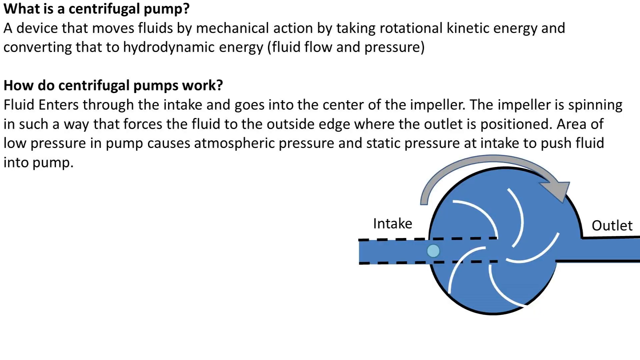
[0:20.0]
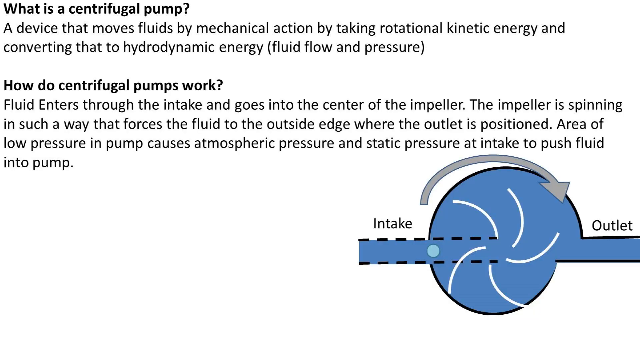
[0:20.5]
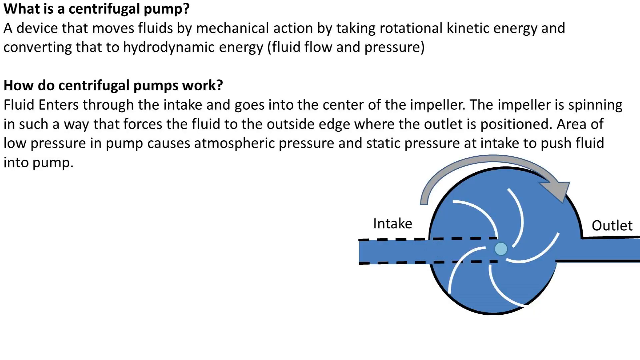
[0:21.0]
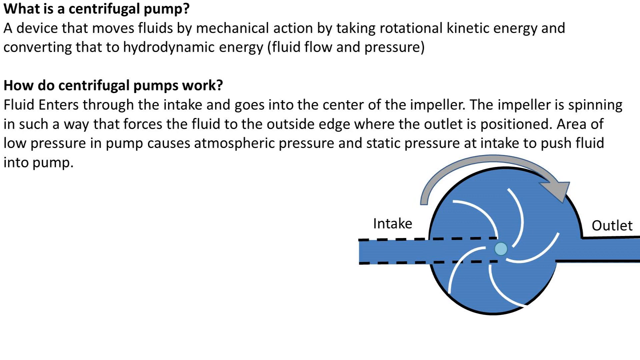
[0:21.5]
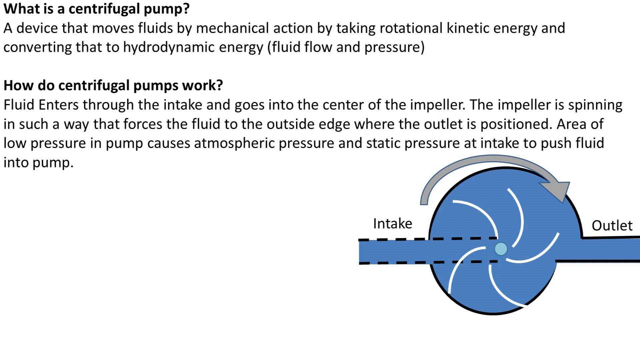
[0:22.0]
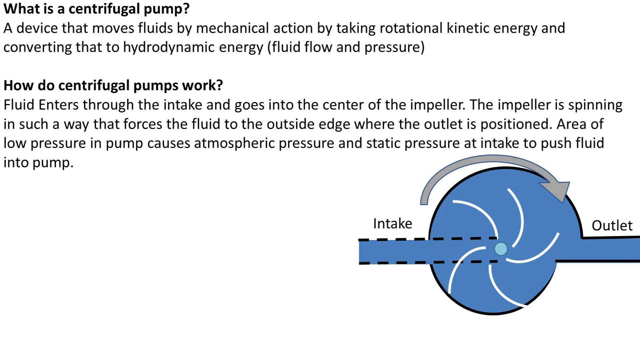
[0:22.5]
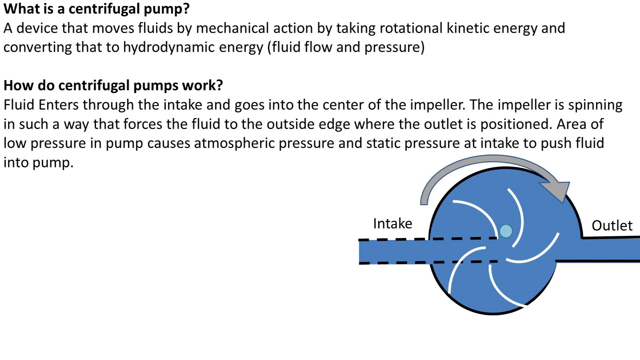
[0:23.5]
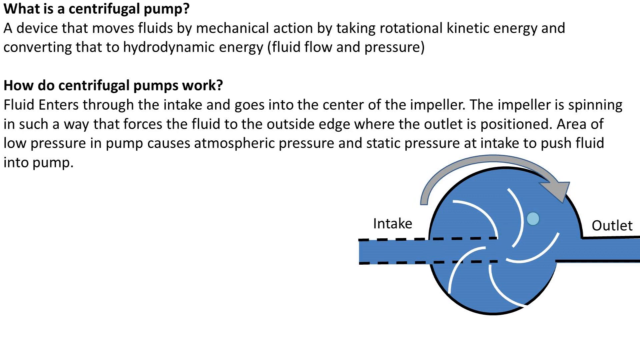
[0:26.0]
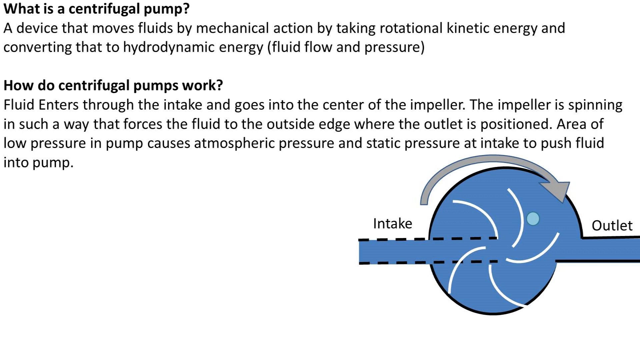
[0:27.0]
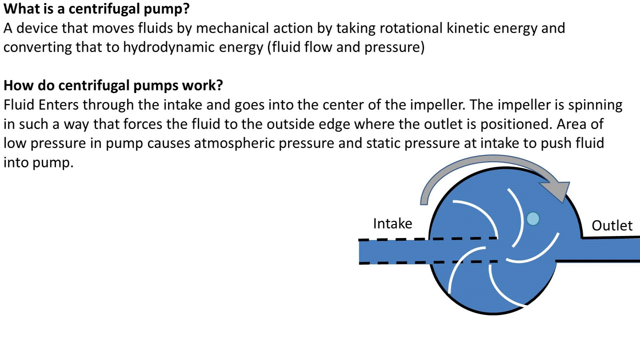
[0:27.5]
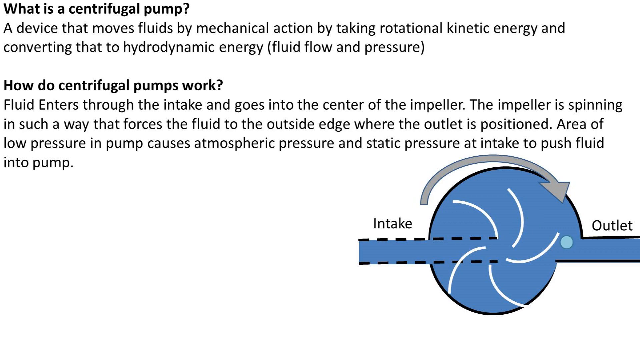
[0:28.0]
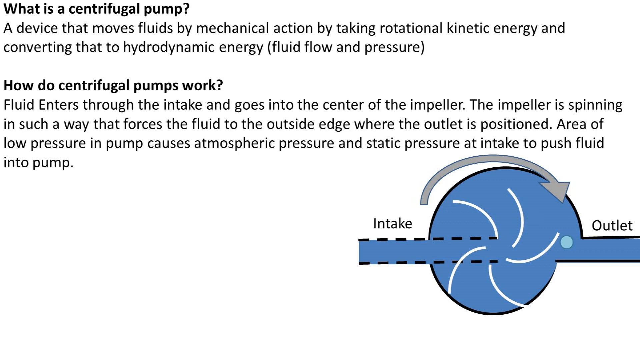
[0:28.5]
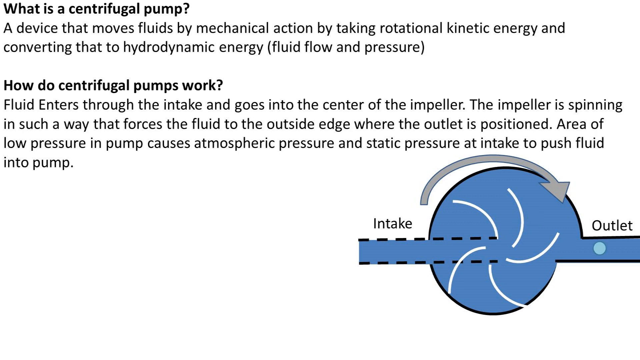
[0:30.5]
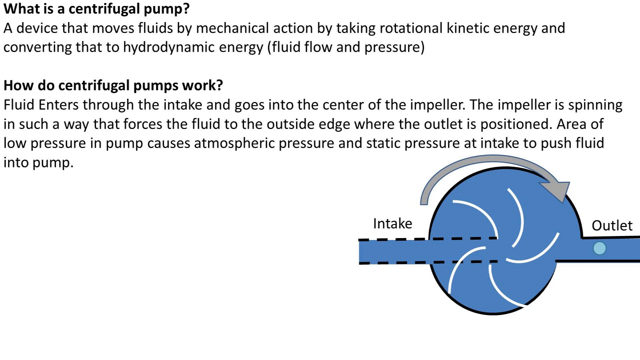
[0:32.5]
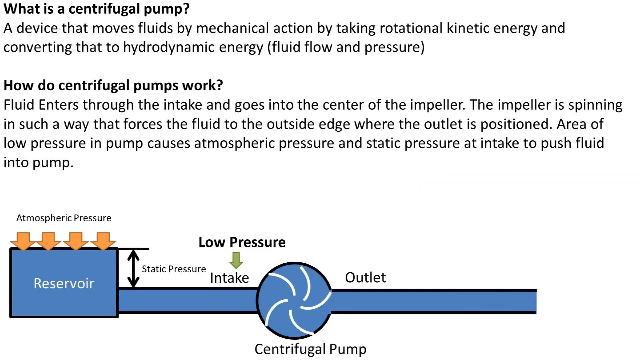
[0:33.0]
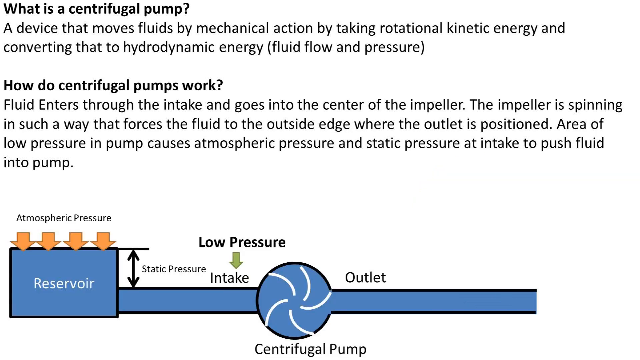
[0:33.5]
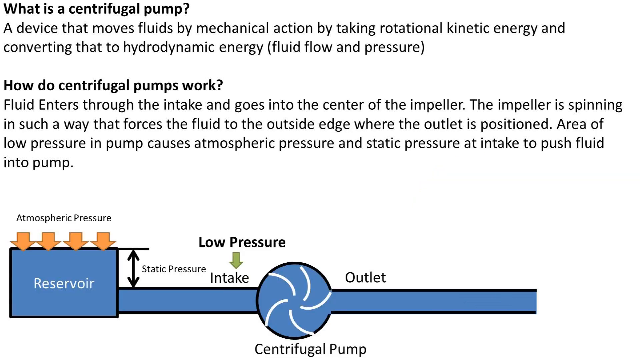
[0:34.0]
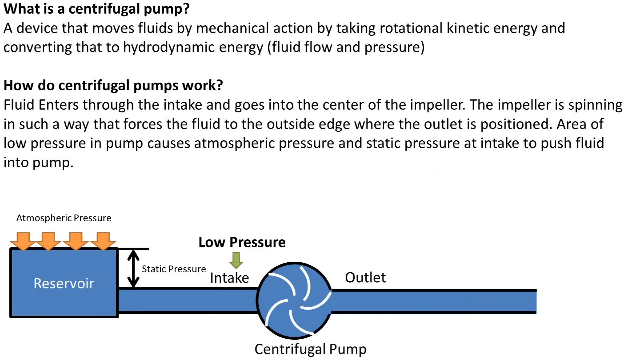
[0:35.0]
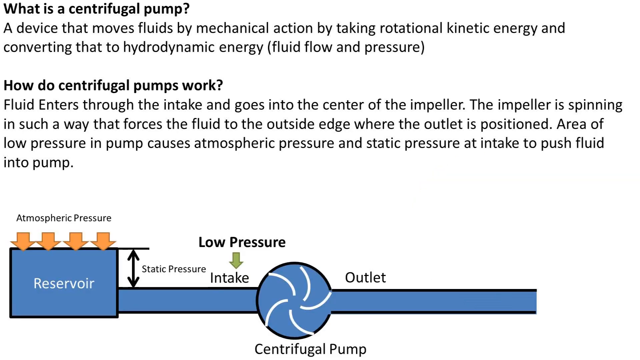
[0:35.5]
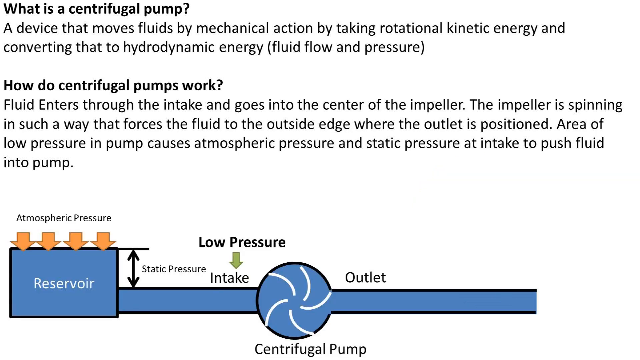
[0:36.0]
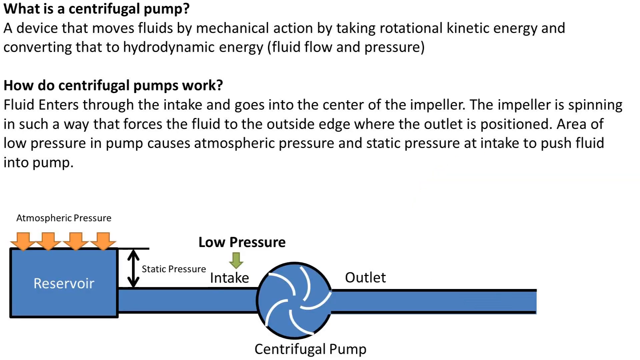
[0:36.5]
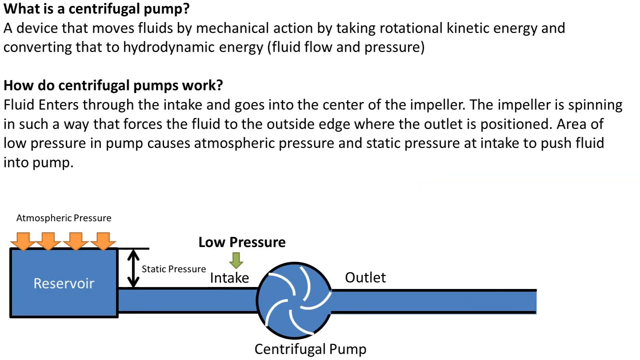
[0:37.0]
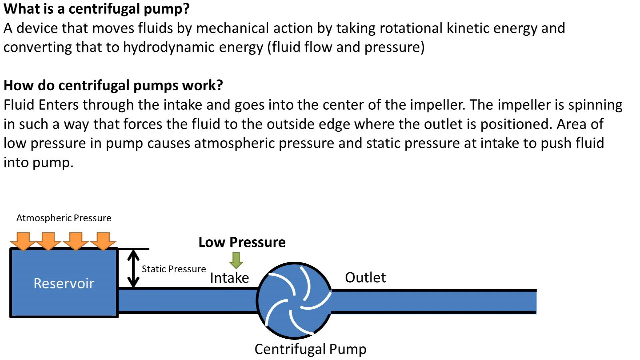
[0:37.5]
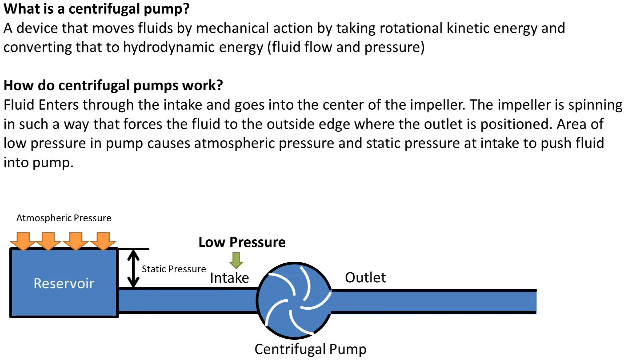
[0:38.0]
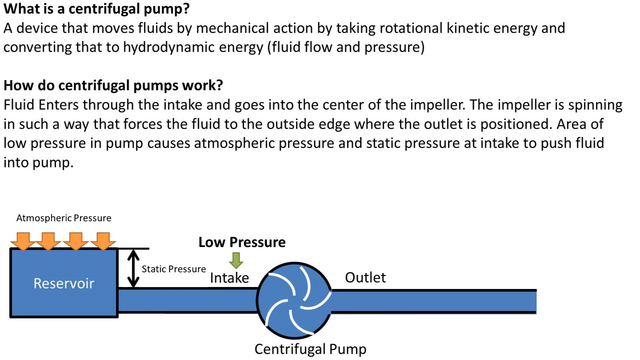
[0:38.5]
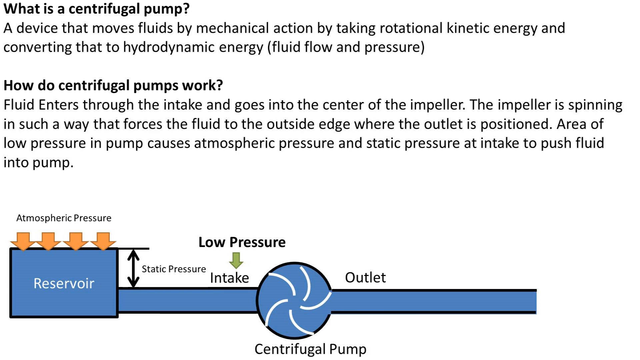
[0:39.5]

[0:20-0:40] More details of the centrifugal pump and how it works are shown: fluid enters through the intake part of the pipe and goes through the center of the impeller, which spins so that the fluid moves to the outer edge, where the outlet is. The background is white and the pump is shown in blue. Atmospheric pressure is shown in the diagram with four orange arrows that are wide, white at the base, and pointing down. Static pressure is represented by a black arrow with two arrowheads, one up and one down.